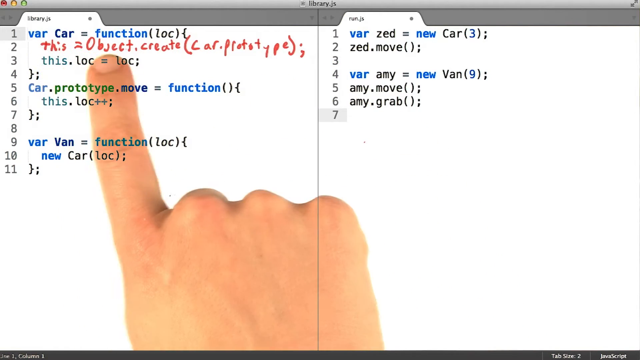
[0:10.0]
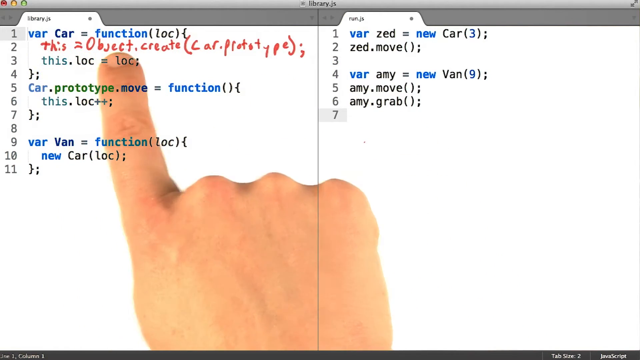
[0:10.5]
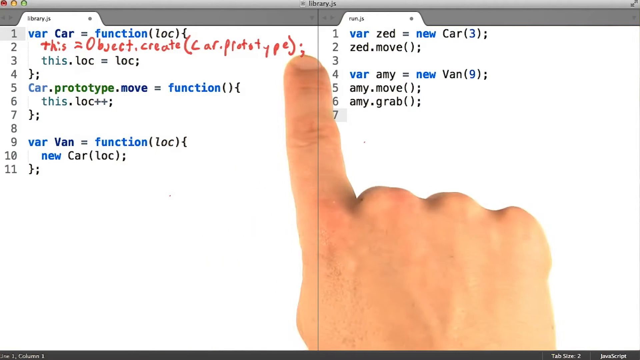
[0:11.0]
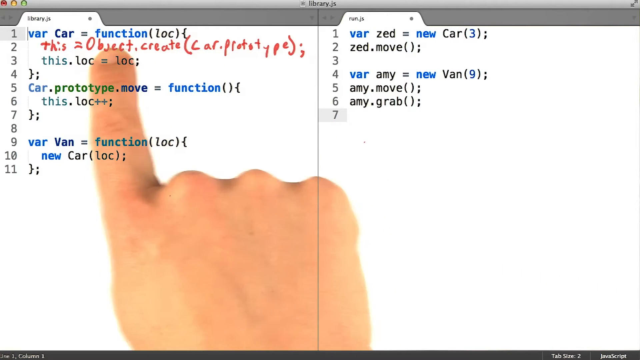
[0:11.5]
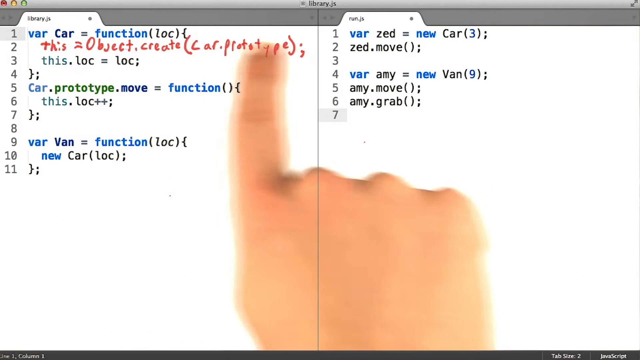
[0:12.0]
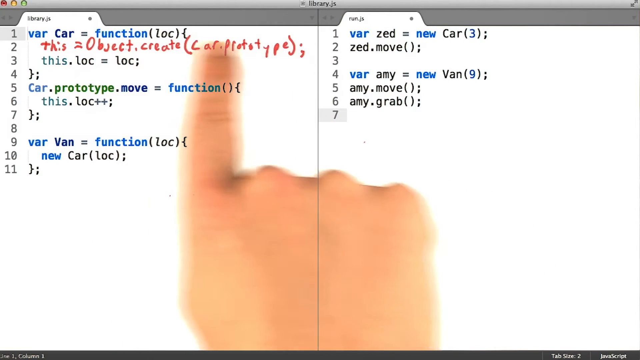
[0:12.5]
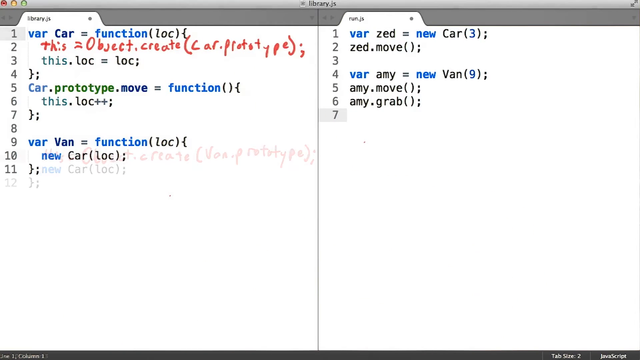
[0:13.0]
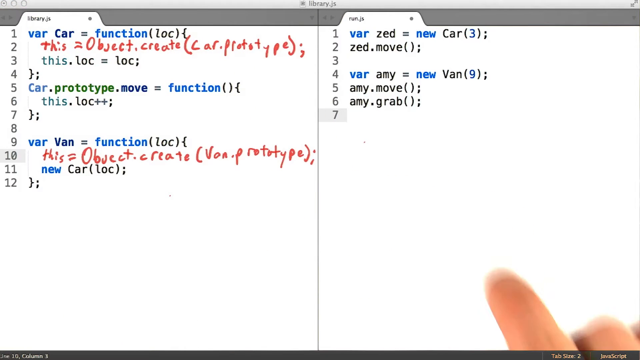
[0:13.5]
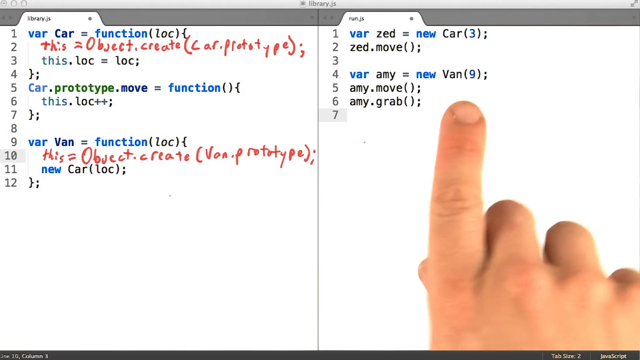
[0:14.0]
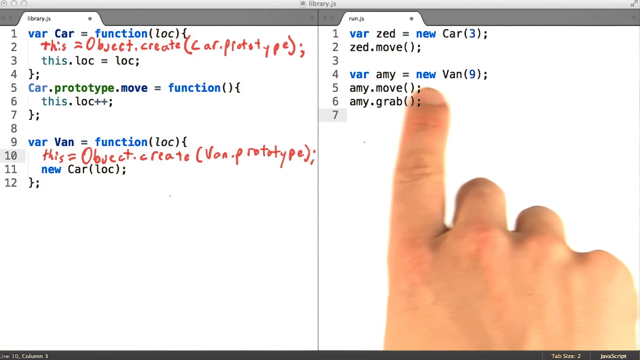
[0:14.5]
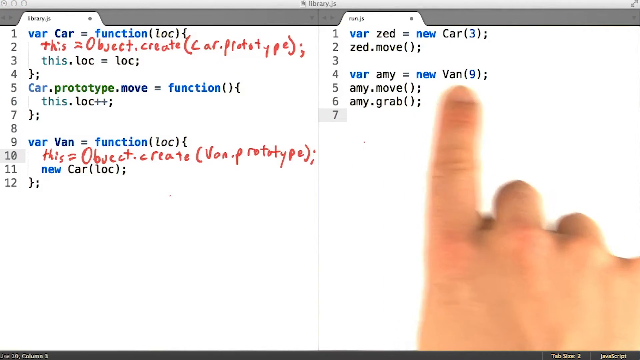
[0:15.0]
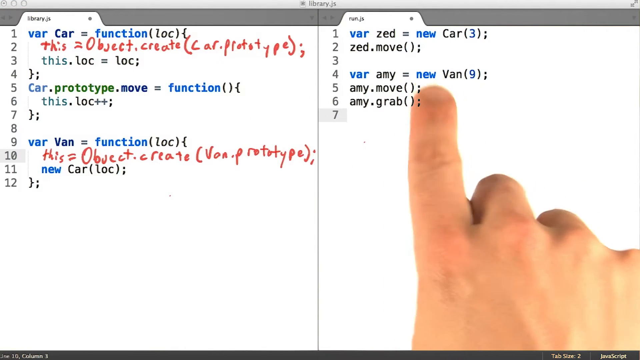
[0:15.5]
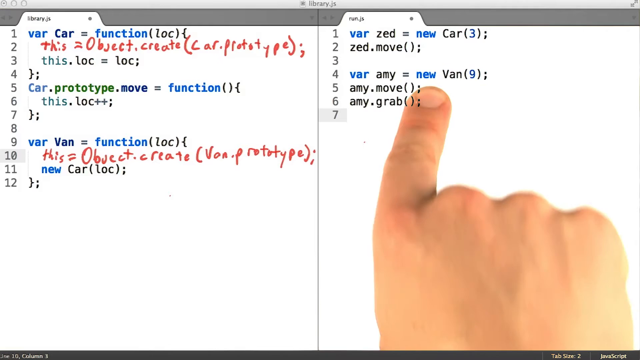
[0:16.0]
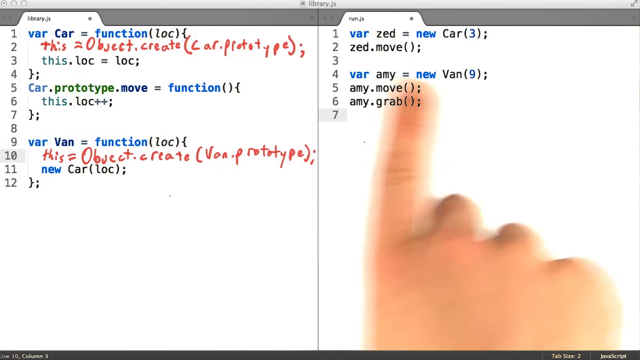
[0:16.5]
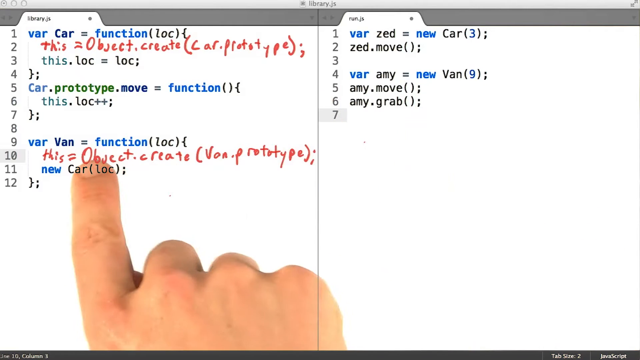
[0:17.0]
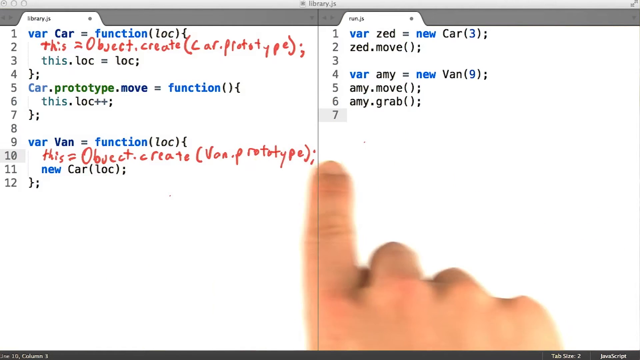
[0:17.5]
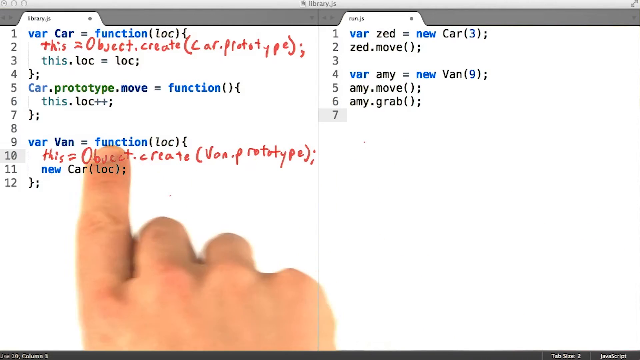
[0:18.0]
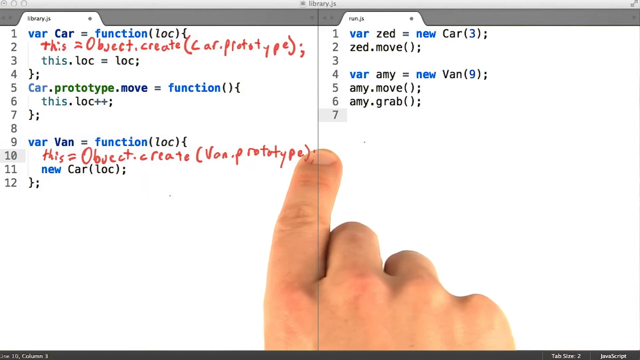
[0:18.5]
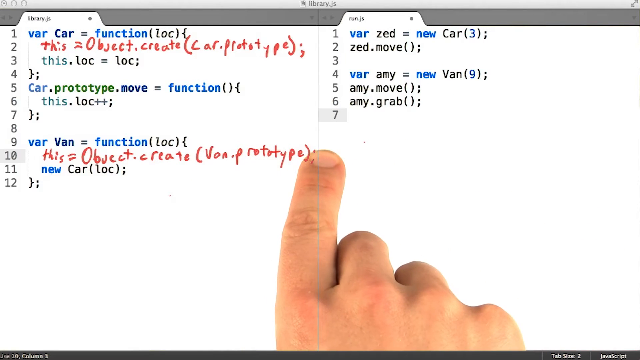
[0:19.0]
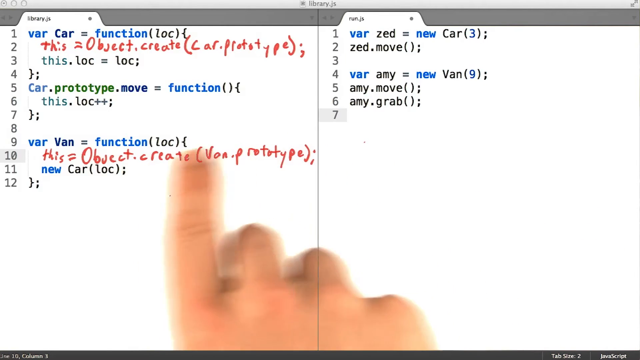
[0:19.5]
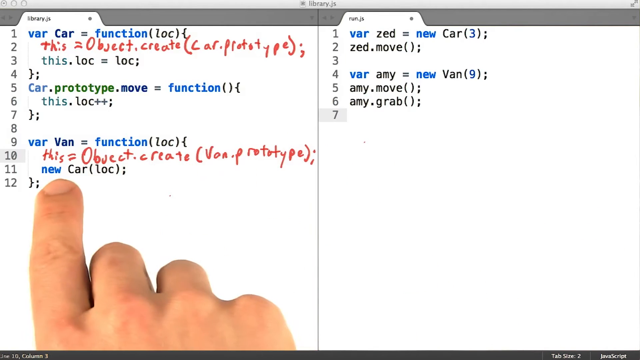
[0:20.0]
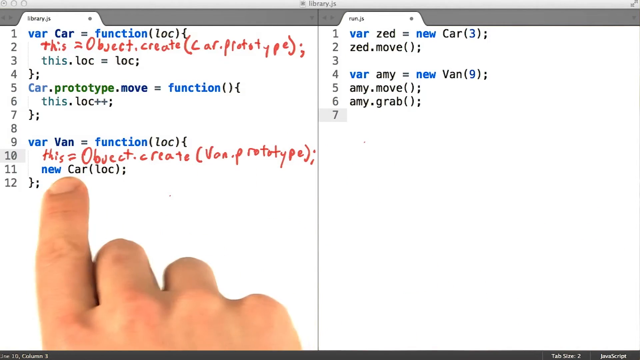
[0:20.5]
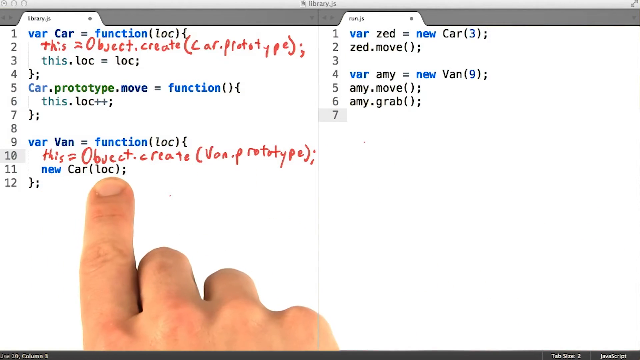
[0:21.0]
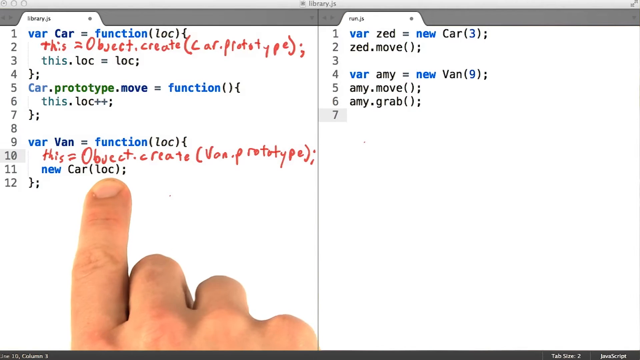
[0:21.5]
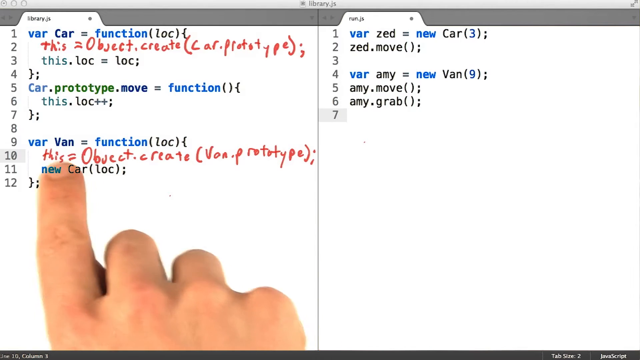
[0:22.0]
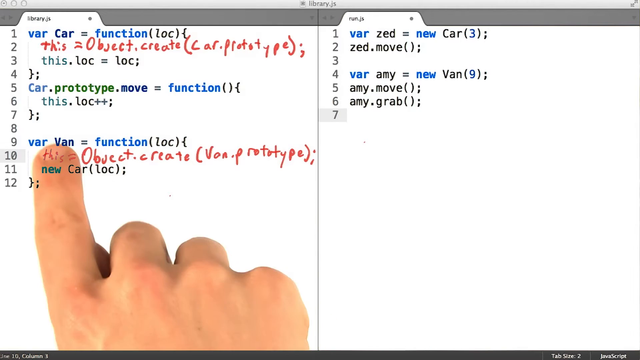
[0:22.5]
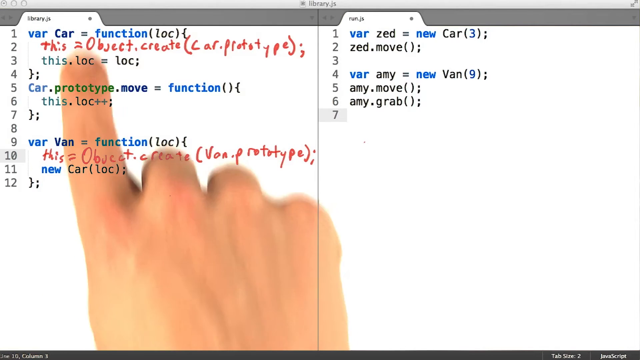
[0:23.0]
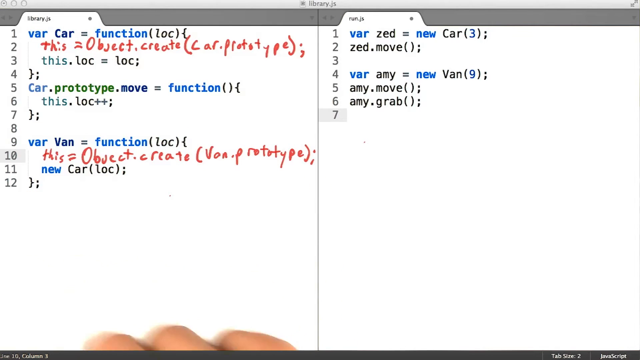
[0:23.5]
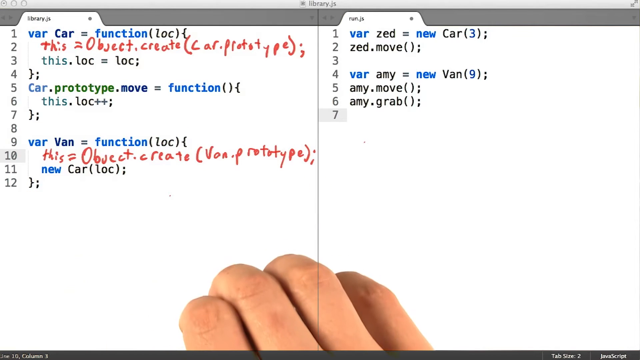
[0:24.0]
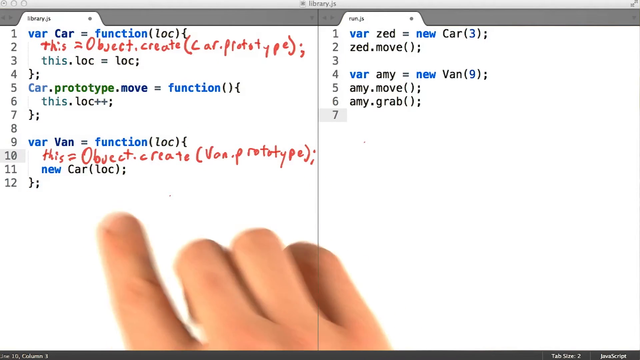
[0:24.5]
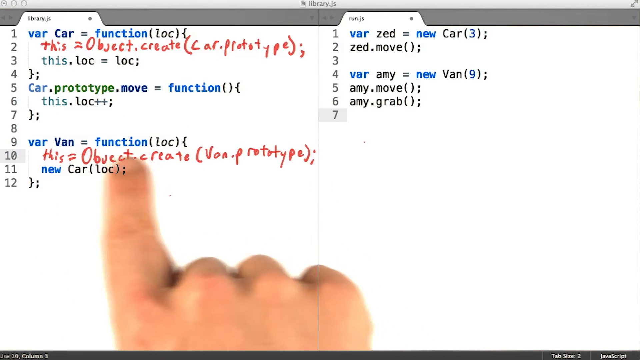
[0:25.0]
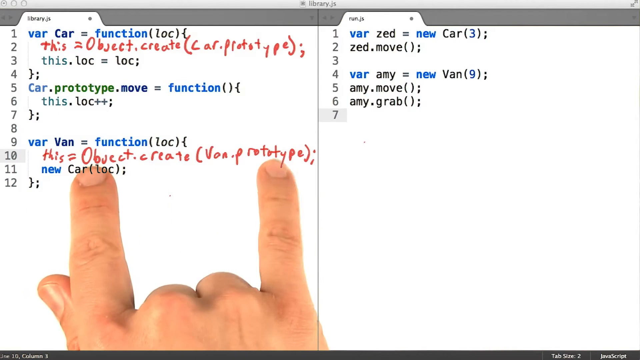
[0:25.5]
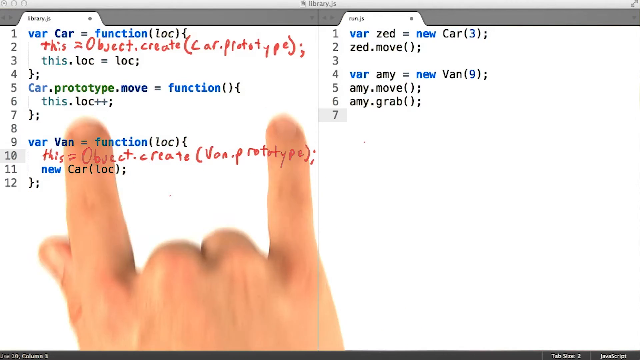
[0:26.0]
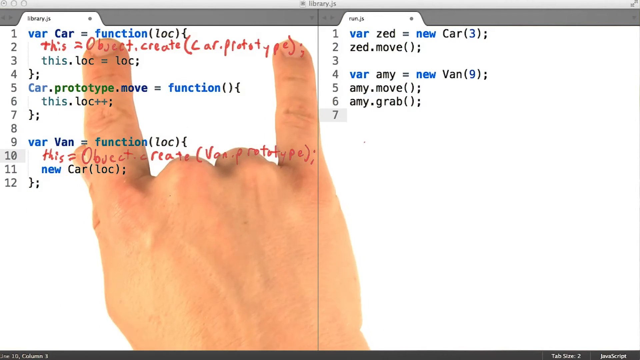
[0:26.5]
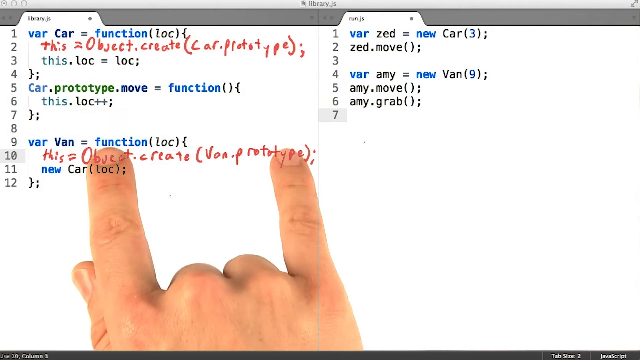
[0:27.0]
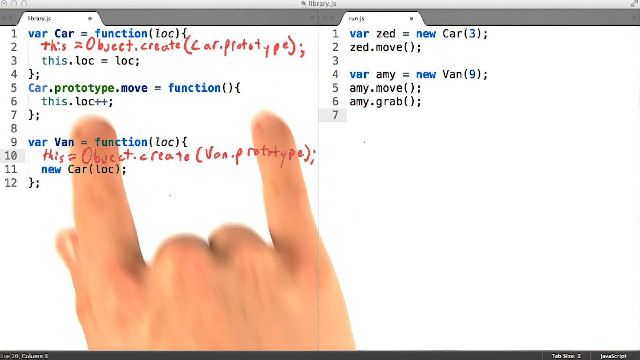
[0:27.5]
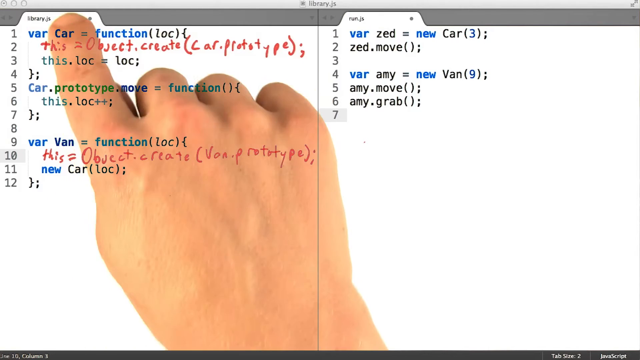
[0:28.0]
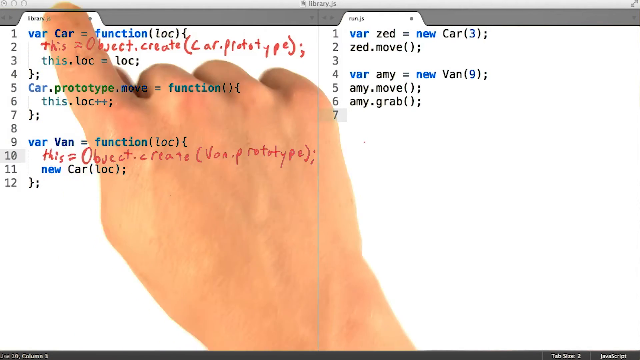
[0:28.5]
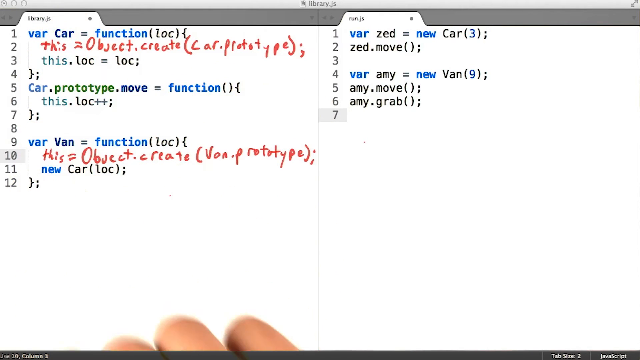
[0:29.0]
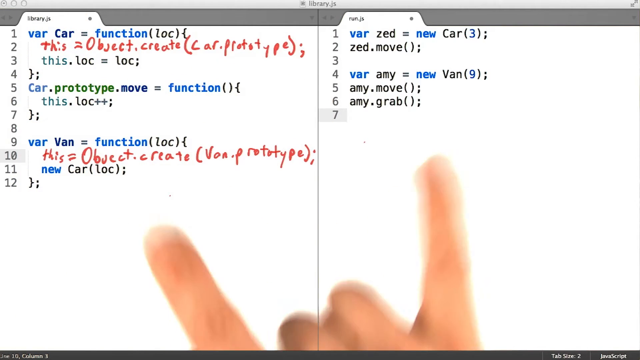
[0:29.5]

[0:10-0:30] The same split screen shows similar lines of code on the left and right. The left side says "VAR car equals function" with "LOC" in parentheses. The second and 10th lines of code appear to be handwriting; it says "this equals object.create" followed by "car.prototype" in parentheses. The right-hand side of the screen has seven lines of code, with the third and seventh lines blank. A hand appears on the screen, seemingly the right hand of a white or light-skinned person. It points to different lines of code with the index finger, going down the lines, then the index and pinky fingers point out as the hand gestures from left to right and points to the 10th line of code. Using the index and pinky fingers, the hand makes gestures as if moving code up and down on the left-hand side and moving code from the left-hand side of the screen to the right-hand side.